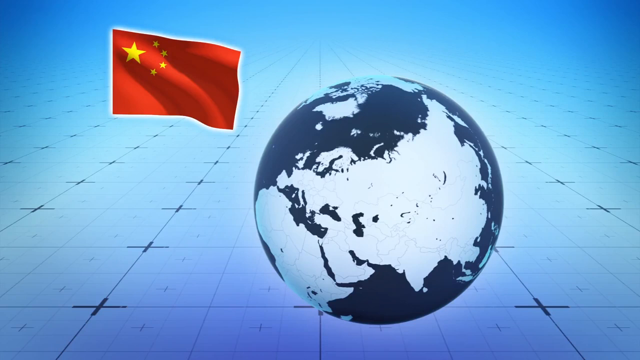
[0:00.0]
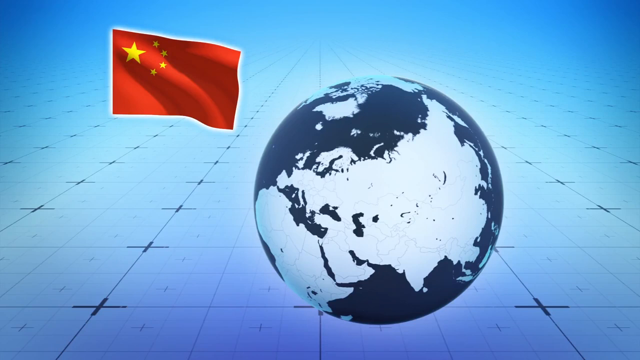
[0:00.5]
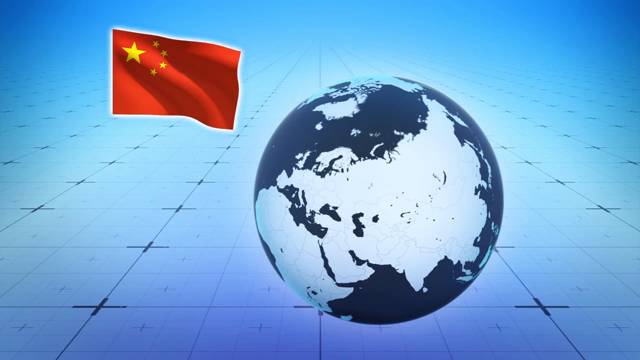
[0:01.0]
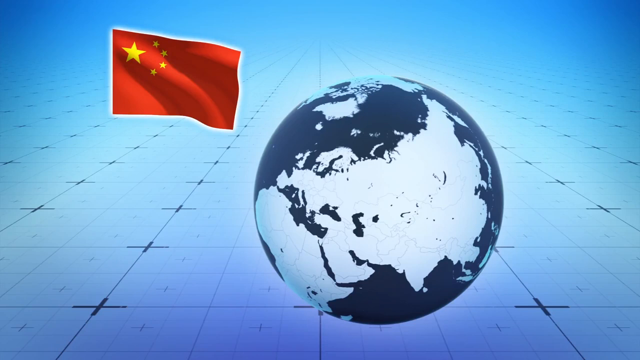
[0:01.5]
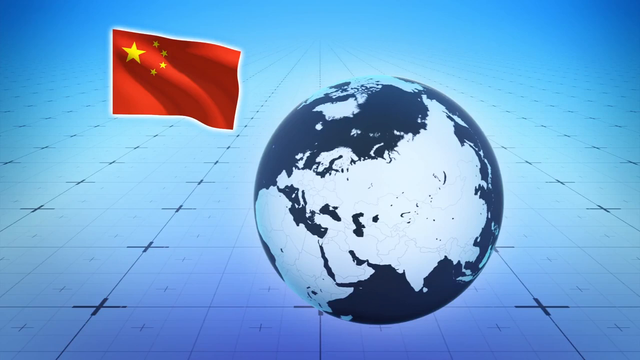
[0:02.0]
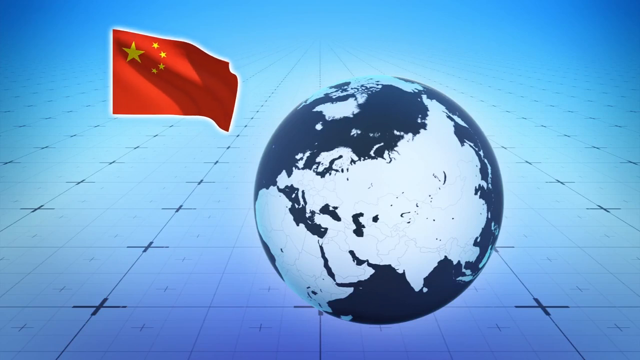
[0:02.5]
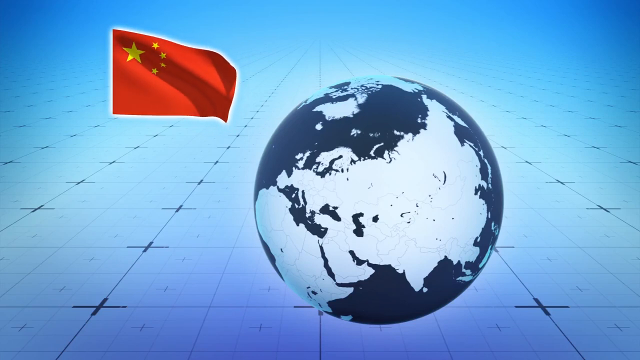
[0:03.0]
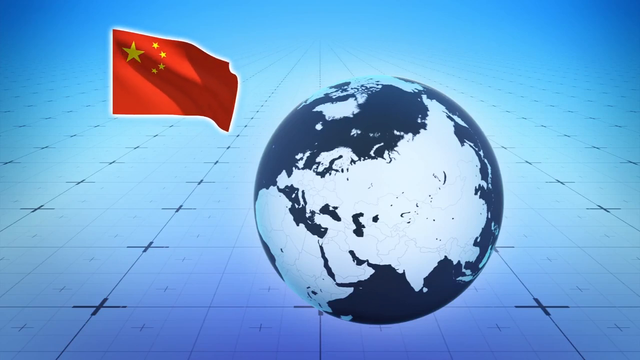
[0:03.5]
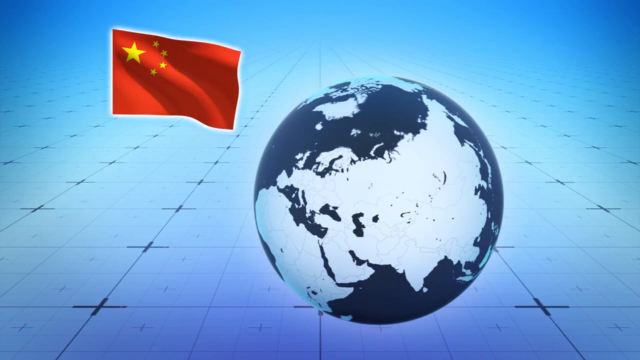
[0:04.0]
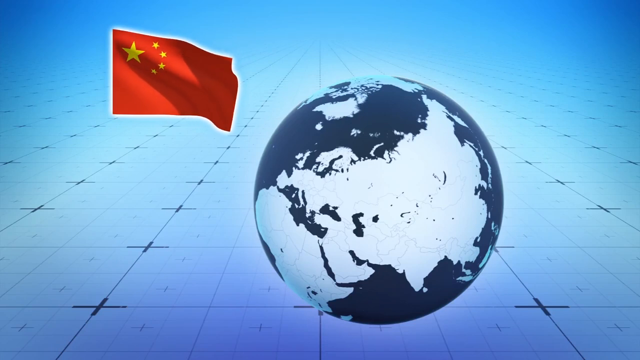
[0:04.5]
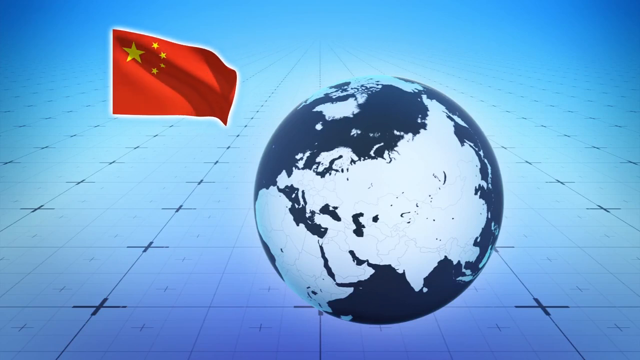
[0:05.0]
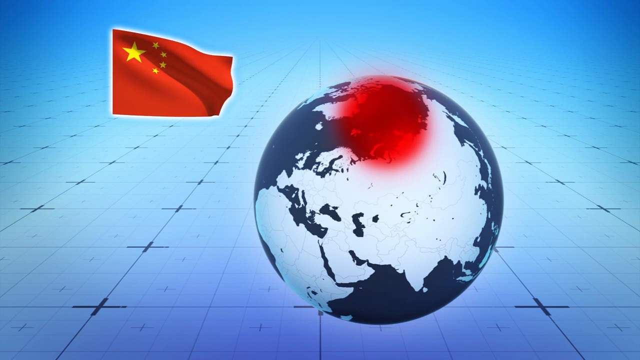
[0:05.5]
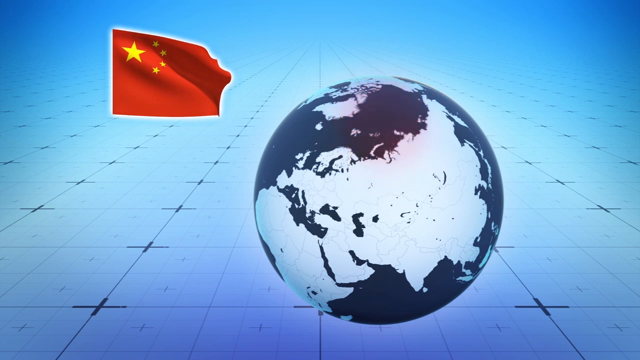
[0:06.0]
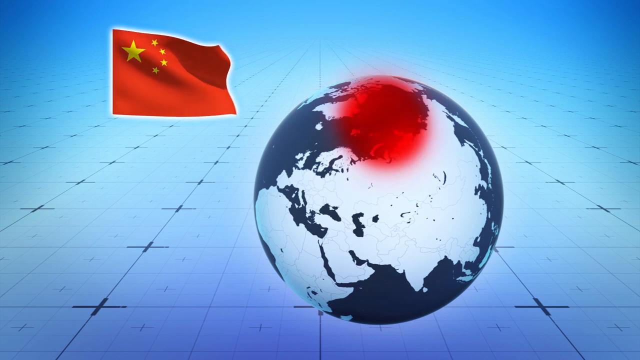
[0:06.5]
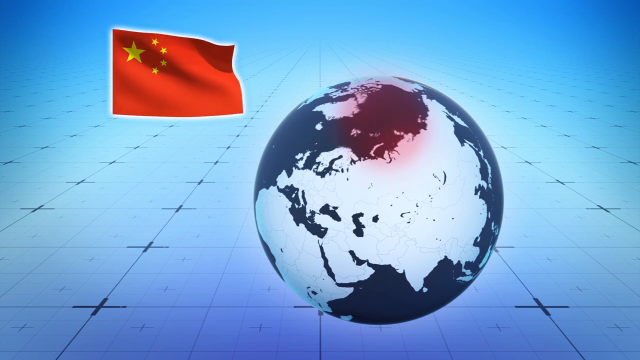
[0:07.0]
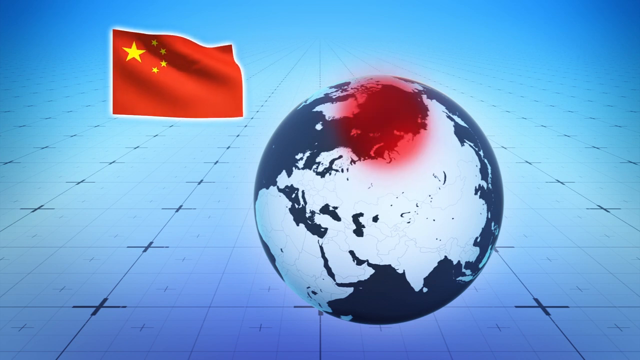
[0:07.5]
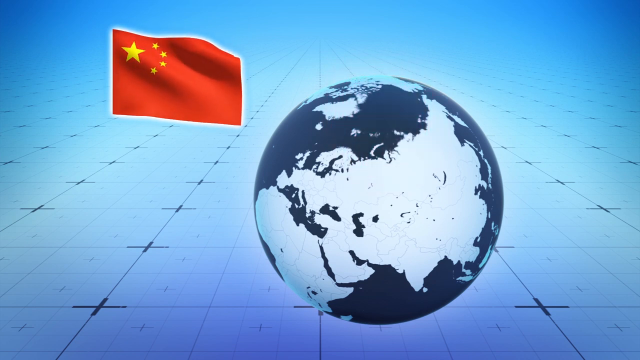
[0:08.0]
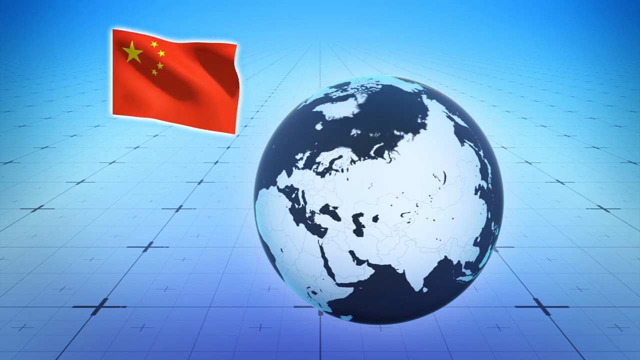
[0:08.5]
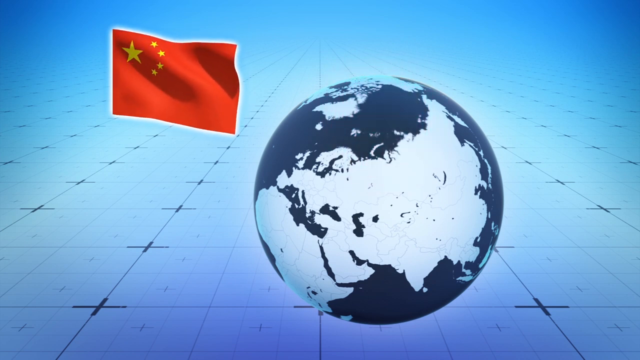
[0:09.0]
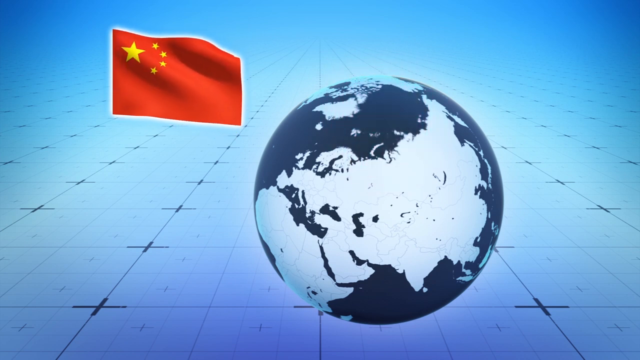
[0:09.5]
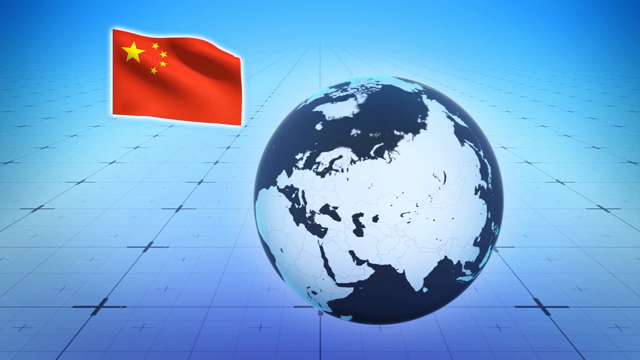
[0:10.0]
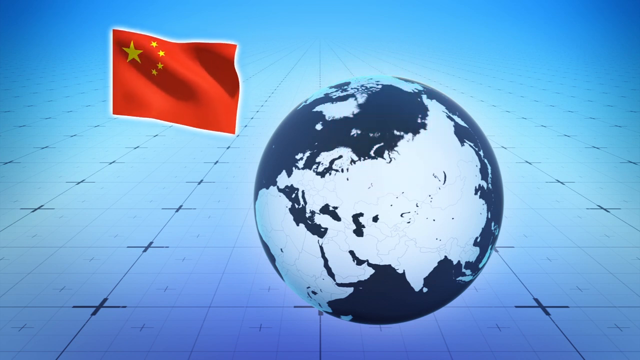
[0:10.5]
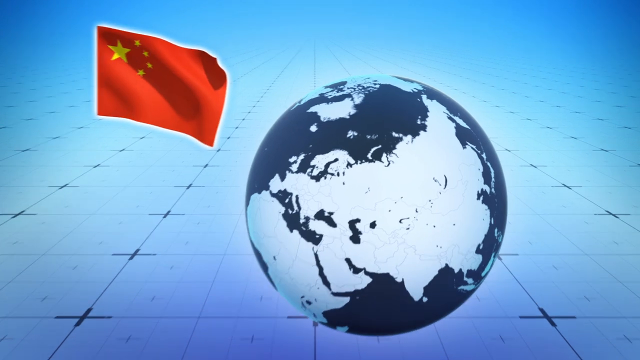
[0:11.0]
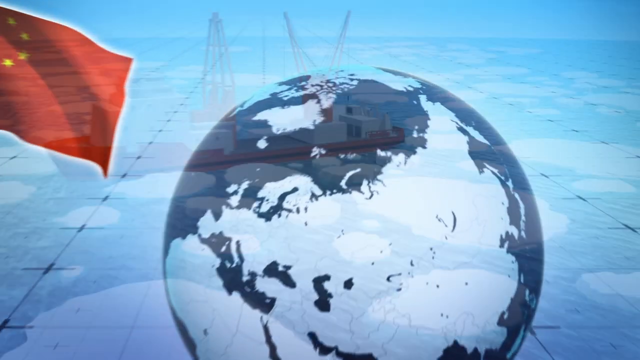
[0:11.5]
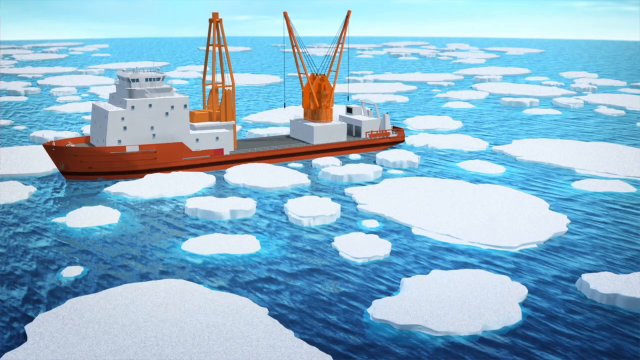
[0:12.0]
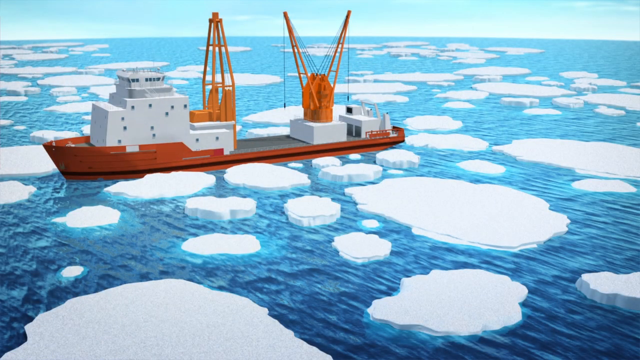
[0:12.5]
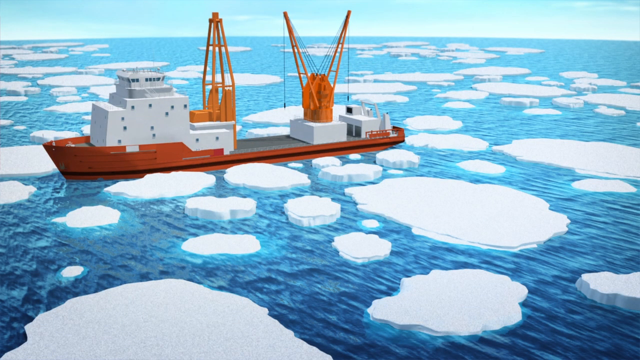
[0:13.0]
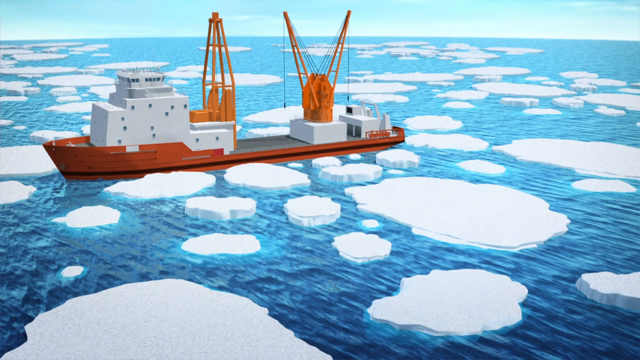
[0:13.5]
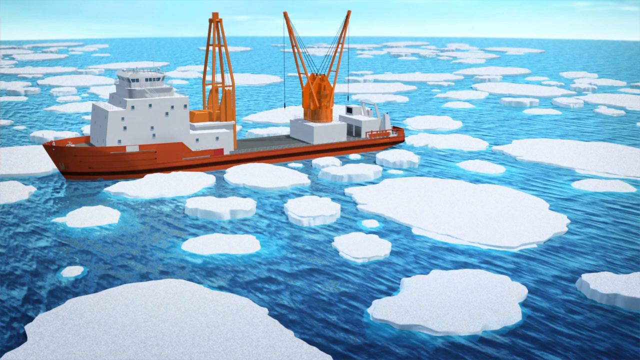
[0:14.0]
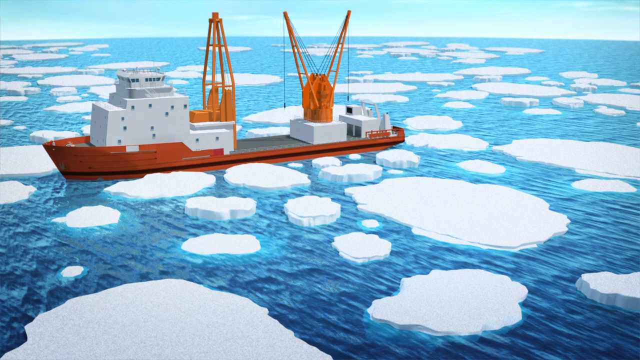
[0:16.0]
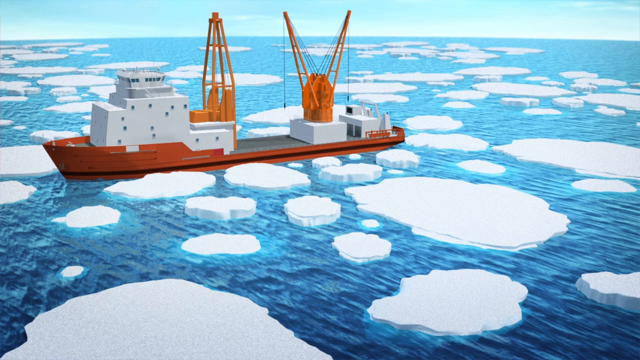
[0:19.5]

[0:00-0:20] The video opens on a blue background with an Earth made up of grey and pale blue rather than the usual dark blue and green. A Chinese flag is in the top left corner; it looks like it is moving even though it is a still image, and then it starts to move like a gif. A red dot appears over the globe towards the top, and the view zooms into the globe. The next screen appears to be the middle of the sea somewhere cold, with multiple icebergs surrounding it. There is a boat that looks like a cargo vessel, with an orange base, stacks of grey on top, and orange cranes and other equipment for moving pieces around. This image is still, and nothing moves on this screen.